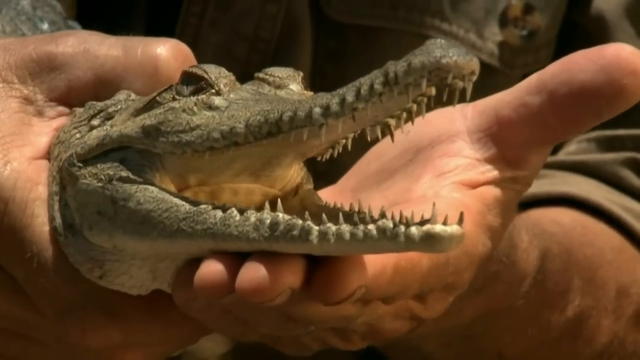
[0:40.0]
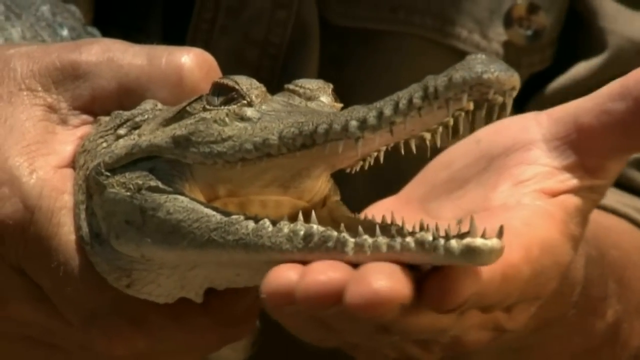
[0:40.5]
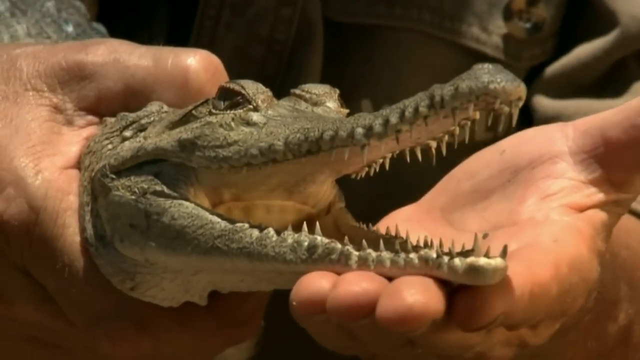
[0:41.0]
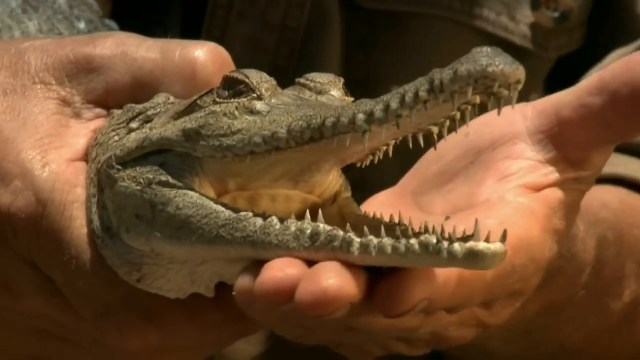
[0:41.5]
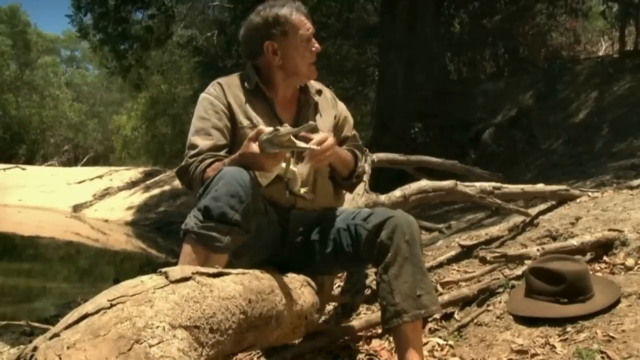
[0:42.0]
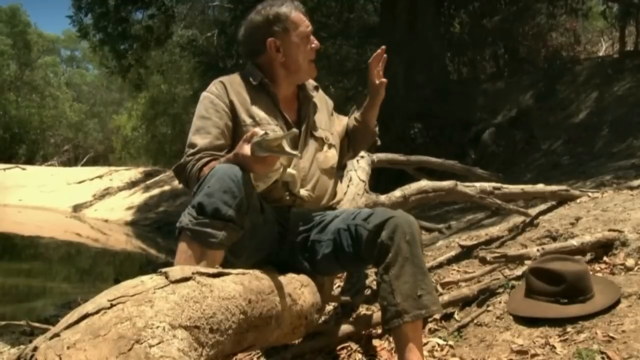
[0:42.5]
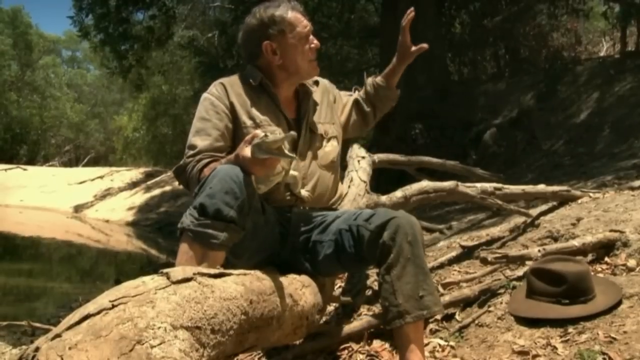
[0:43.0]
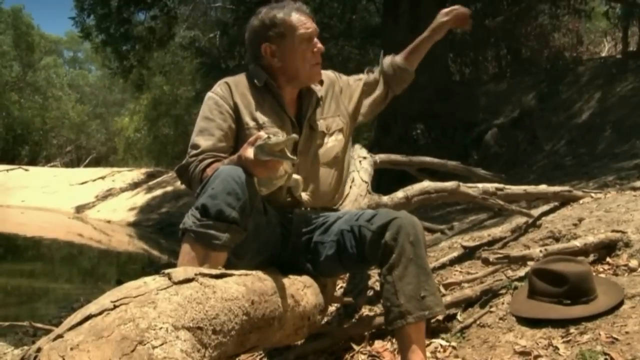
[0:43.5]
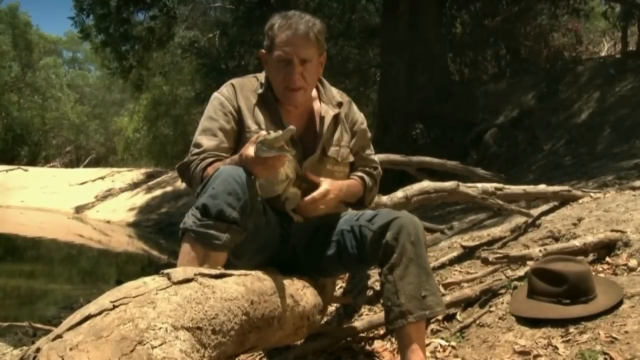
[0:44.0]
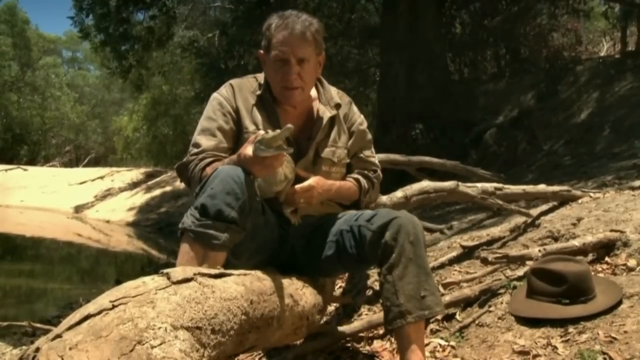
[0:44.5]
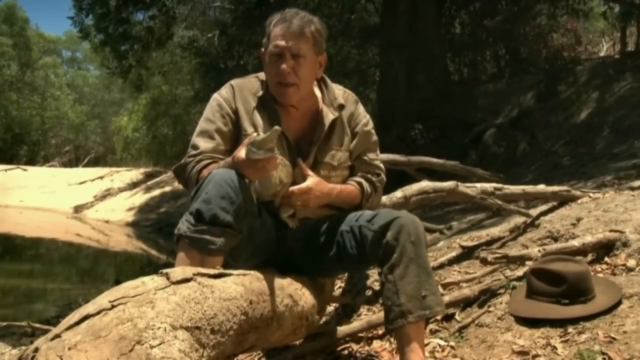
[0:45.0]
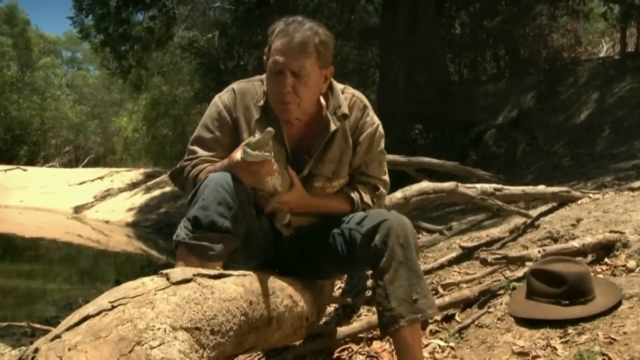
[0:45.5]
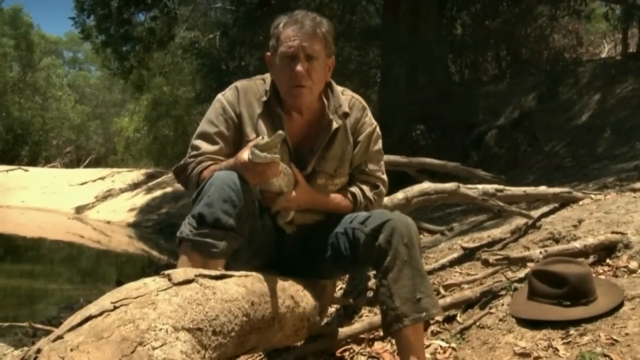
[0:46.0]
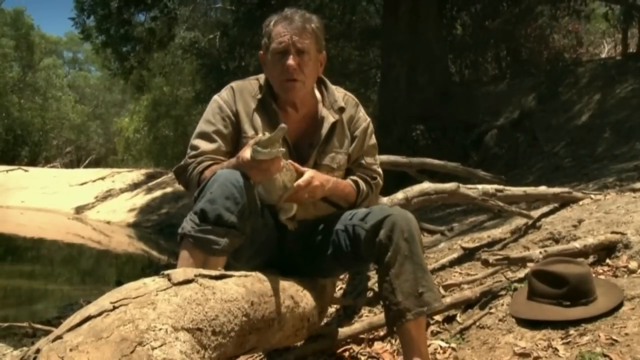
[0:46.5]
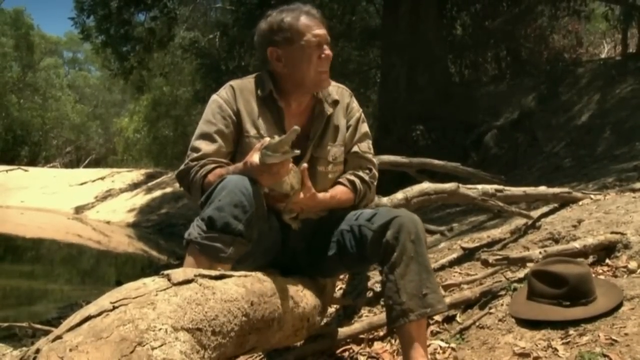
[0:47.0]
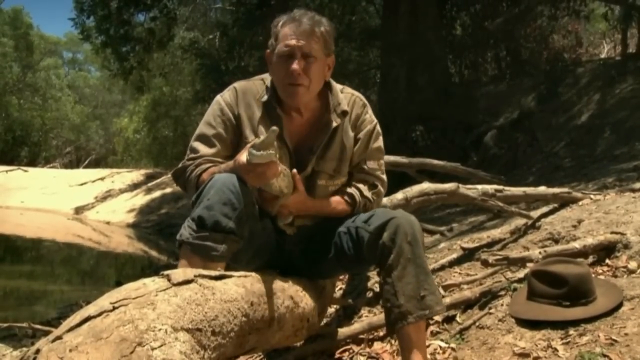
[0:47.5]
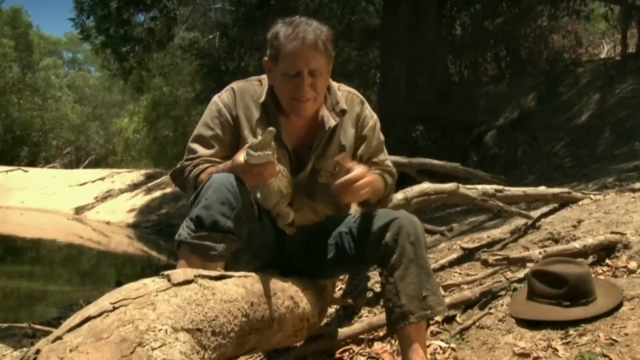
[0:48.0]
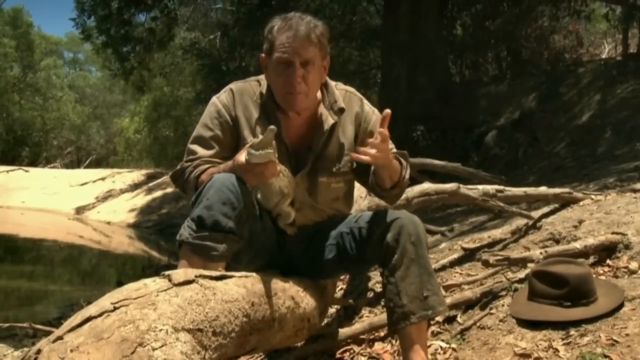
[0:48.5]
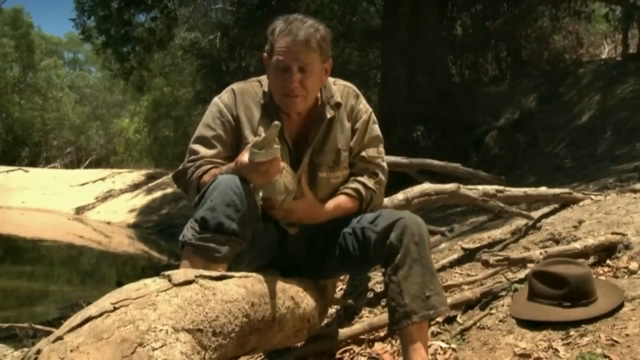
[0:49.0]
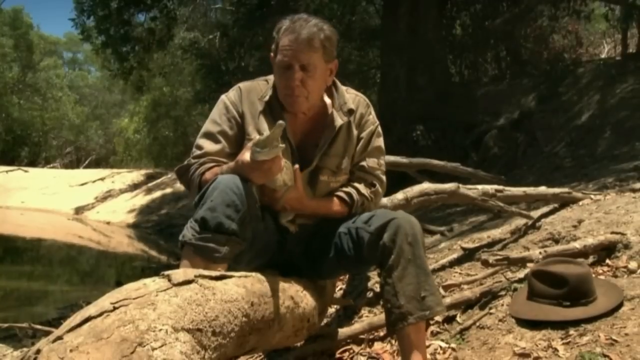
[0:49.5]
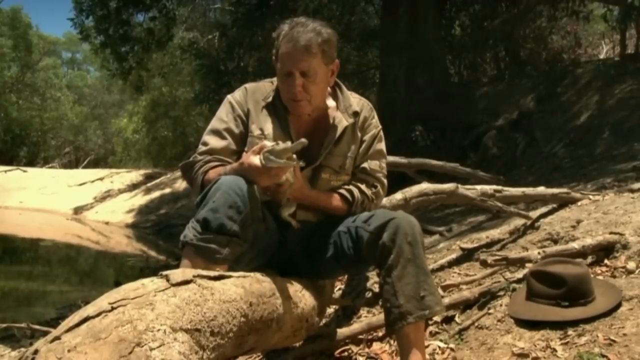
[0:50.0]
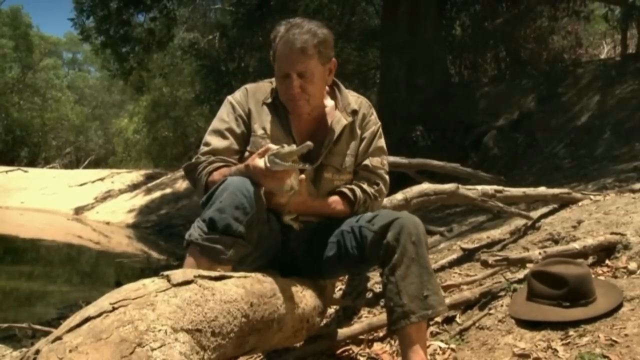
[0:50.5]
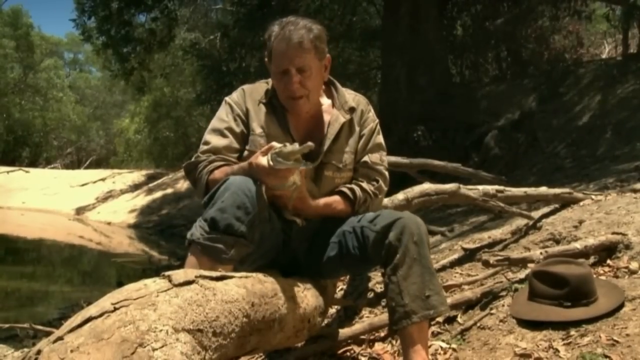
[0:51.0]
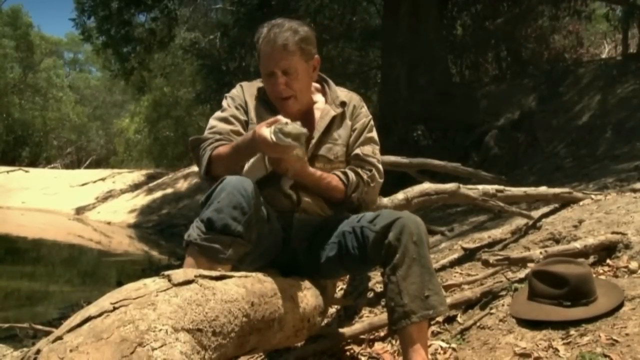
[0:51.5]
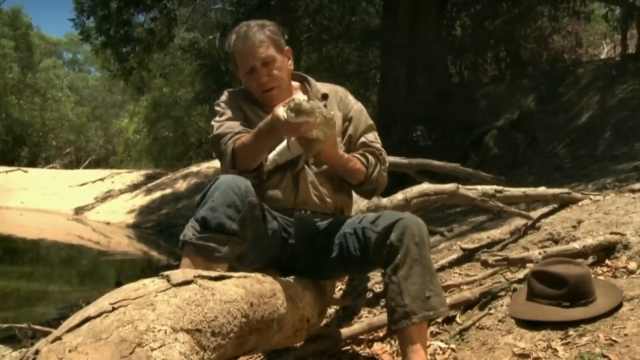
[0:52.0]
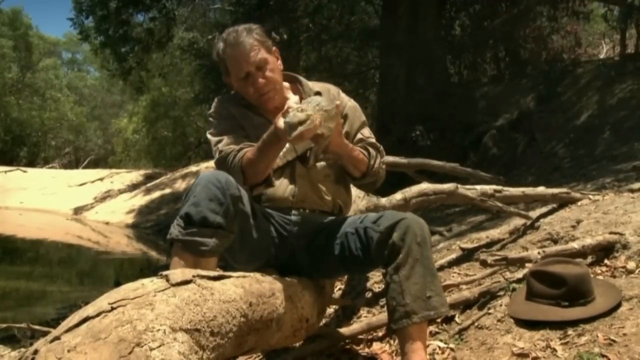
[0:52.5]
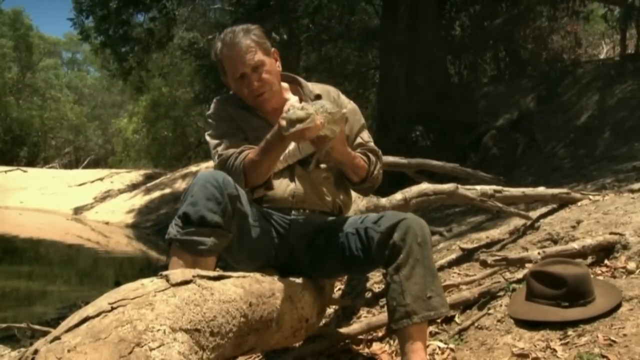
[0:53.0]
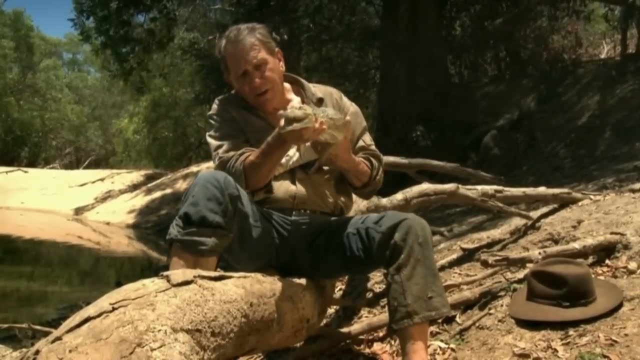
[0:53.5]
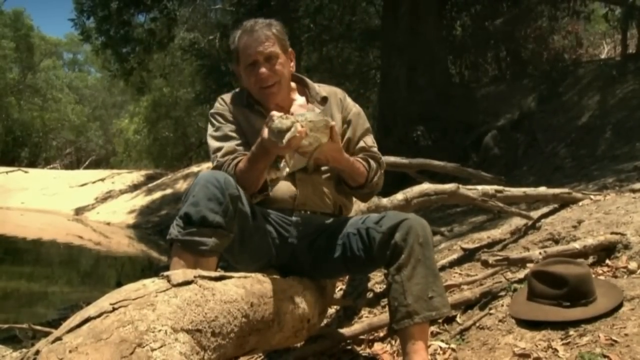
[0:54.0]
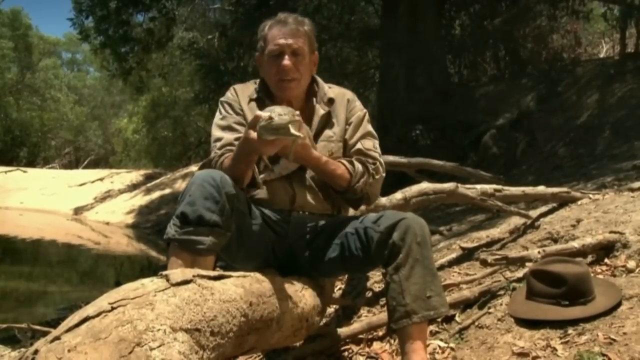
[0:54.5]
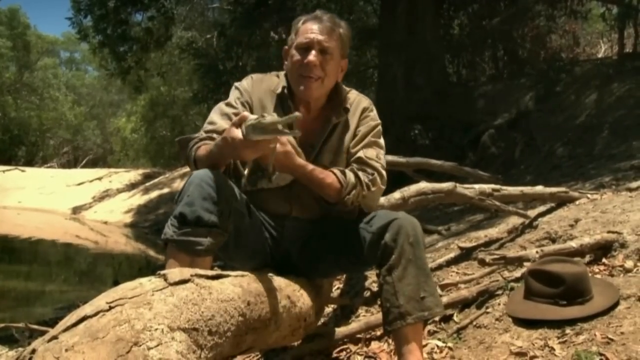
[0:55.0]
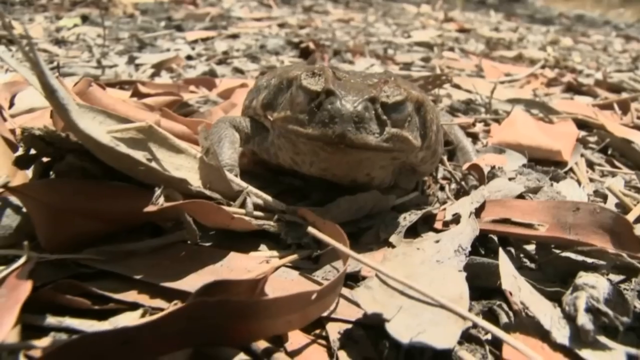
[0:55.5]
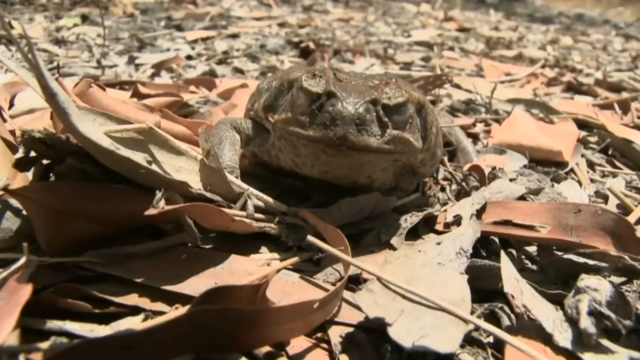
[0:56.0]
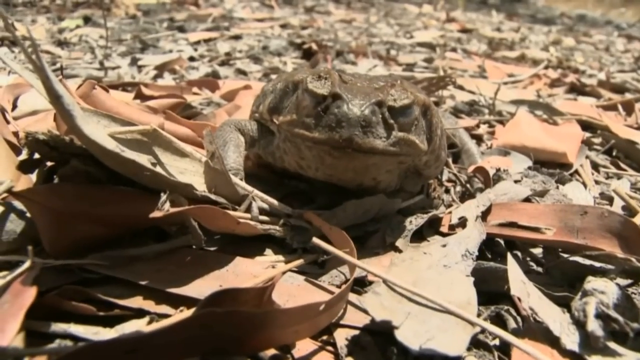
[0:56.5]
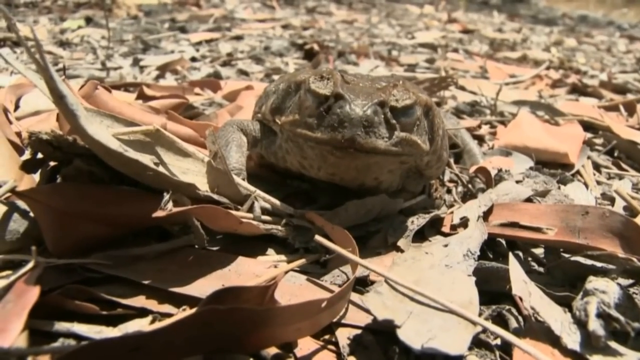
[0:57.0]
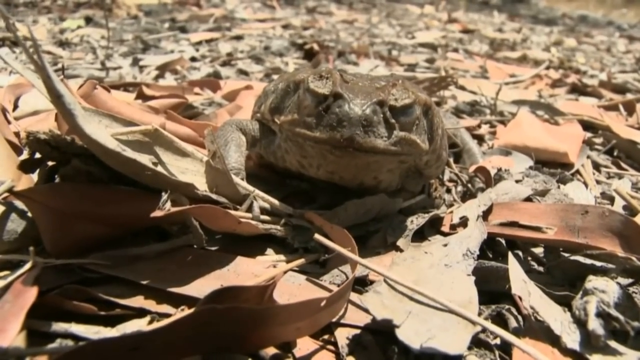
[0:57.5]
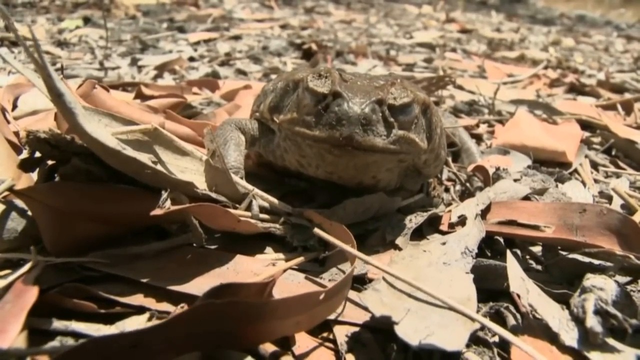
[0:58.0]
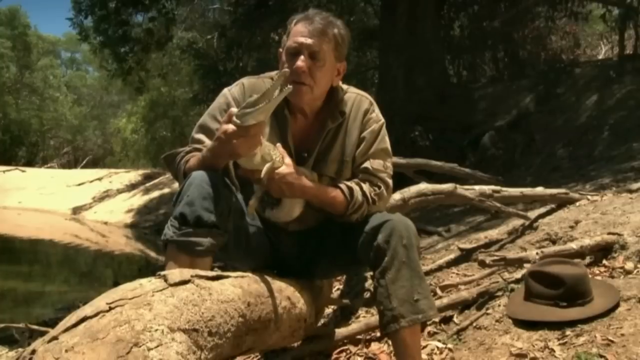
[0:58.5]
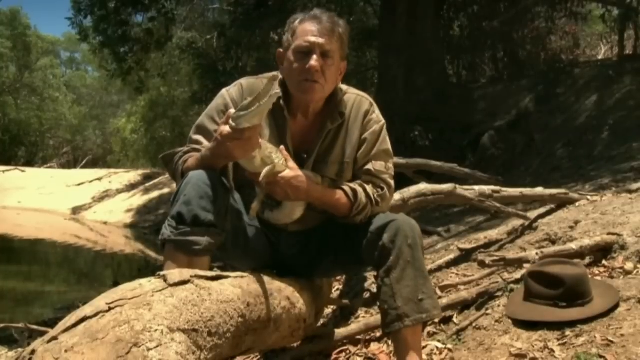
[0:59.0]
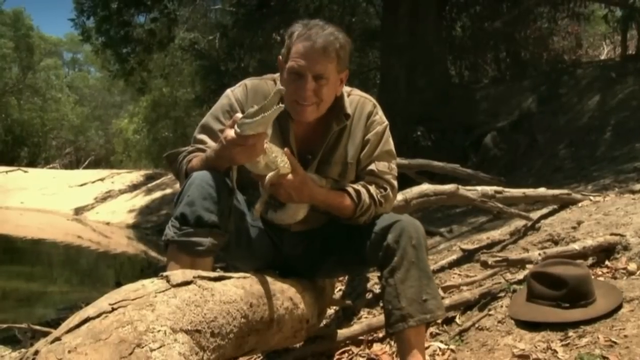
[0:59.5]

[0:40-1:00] The man touches the crocodile's mouth from underneath, and the video sort of zooms out on him. He points toward the forest at the back that encircles the river. He seems to be talking to the camera, still holding the small crocodile in his arms, and seems to play around with it as he seems to examine its whole body, while the crocodile keeps its mouth open. The focus then changes from the man to a frog on the ground, standing on top of leaves and looking at the man with the crocodile. The man is shown again, still seeming to talk to the camera, and he sort of leans toward the camera.